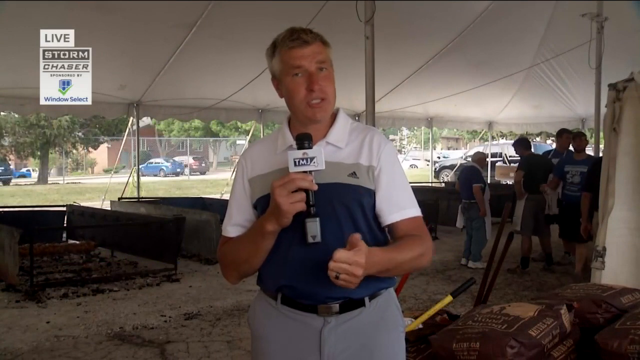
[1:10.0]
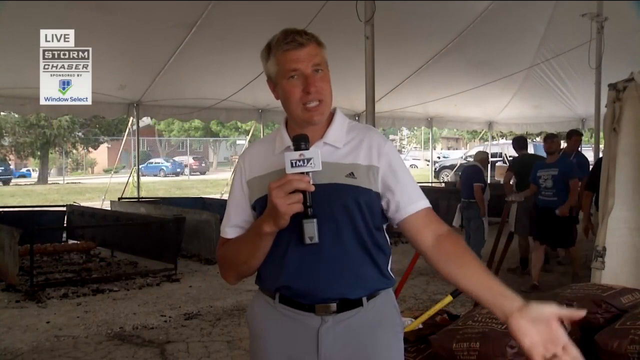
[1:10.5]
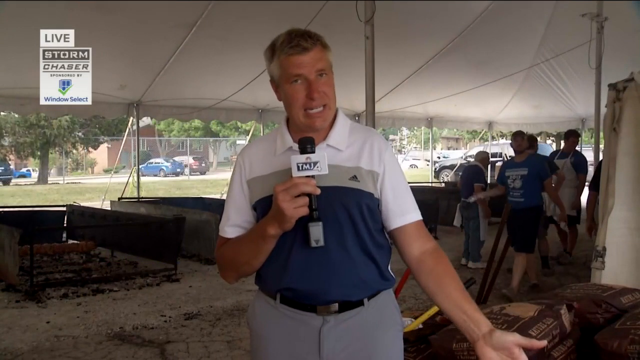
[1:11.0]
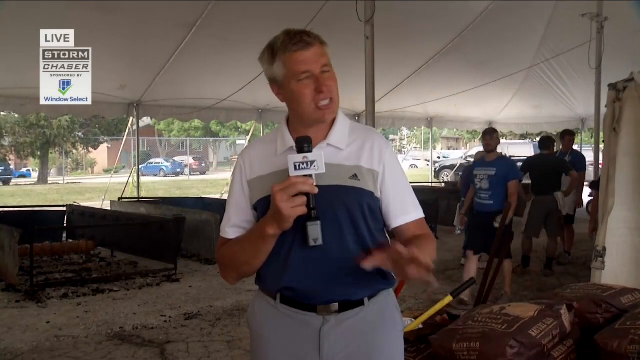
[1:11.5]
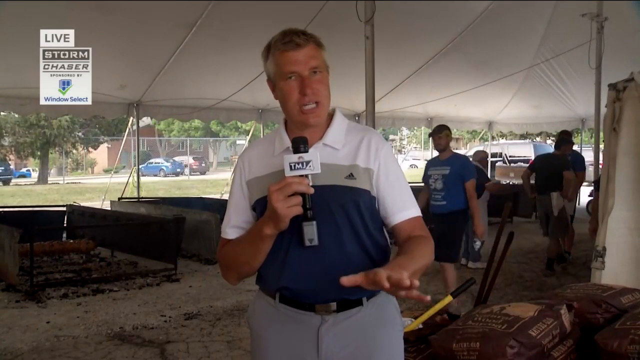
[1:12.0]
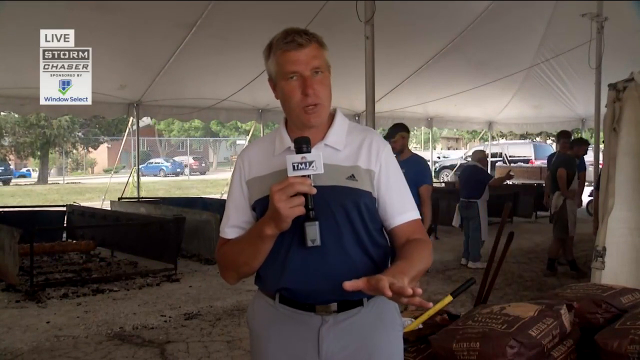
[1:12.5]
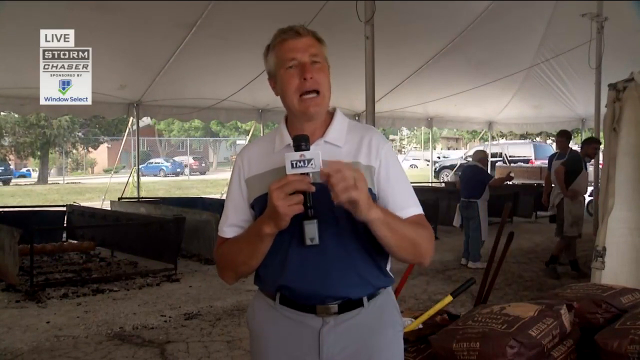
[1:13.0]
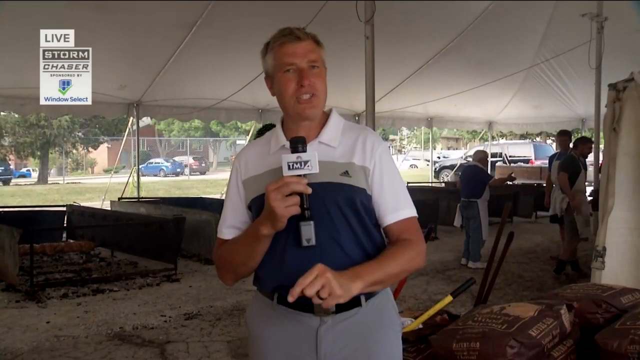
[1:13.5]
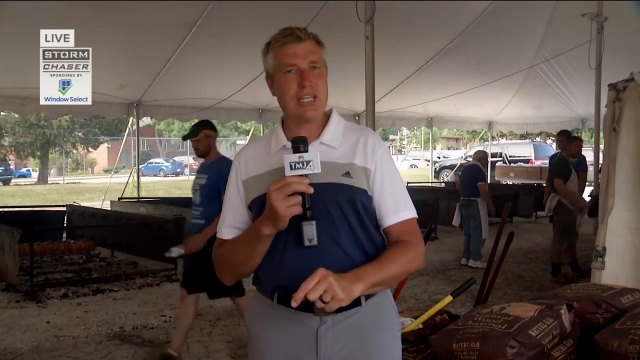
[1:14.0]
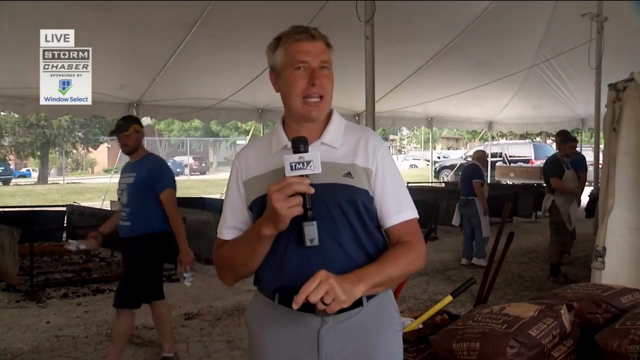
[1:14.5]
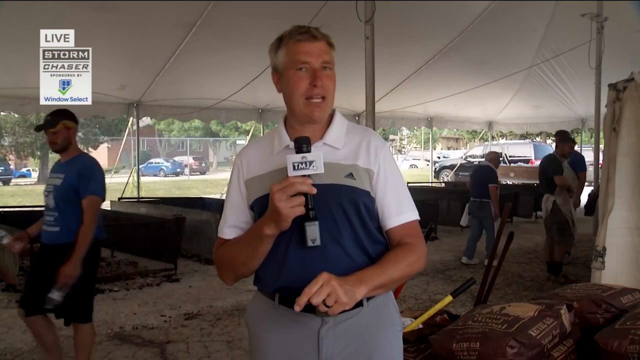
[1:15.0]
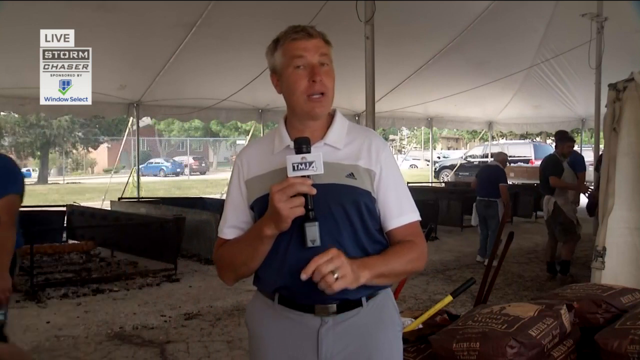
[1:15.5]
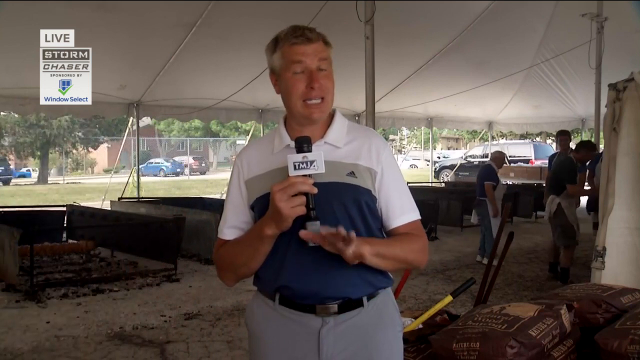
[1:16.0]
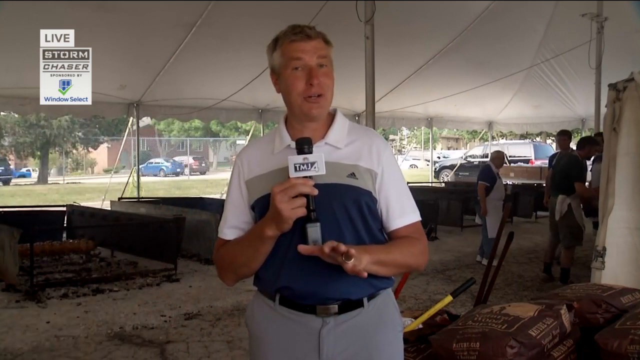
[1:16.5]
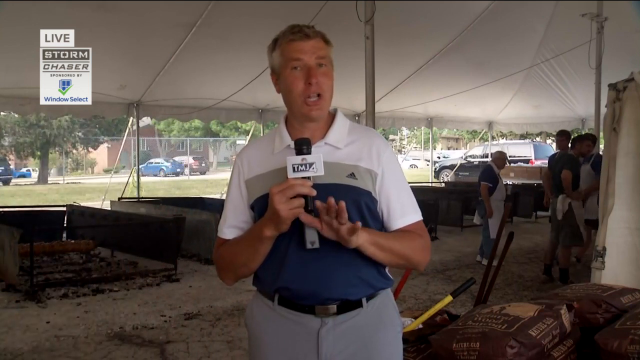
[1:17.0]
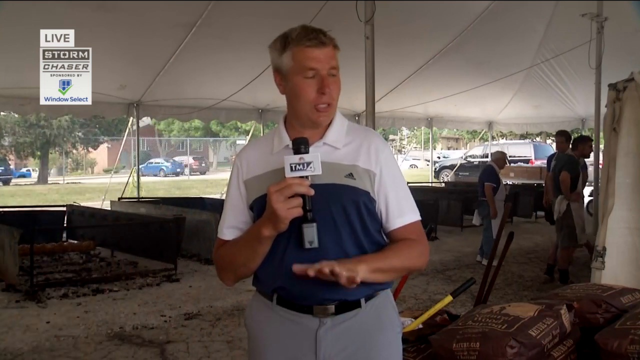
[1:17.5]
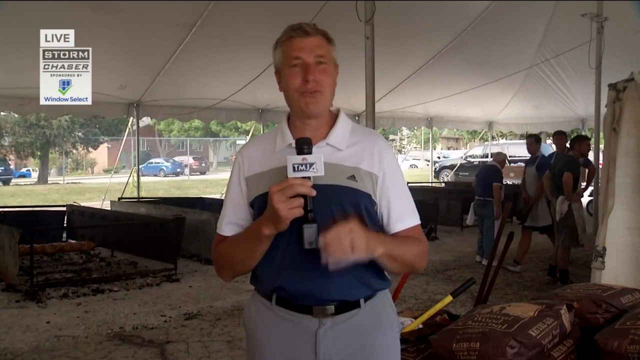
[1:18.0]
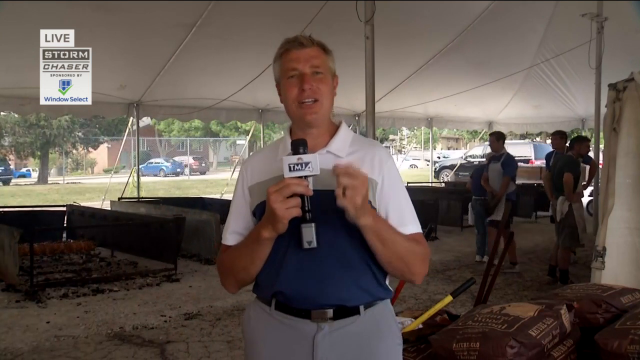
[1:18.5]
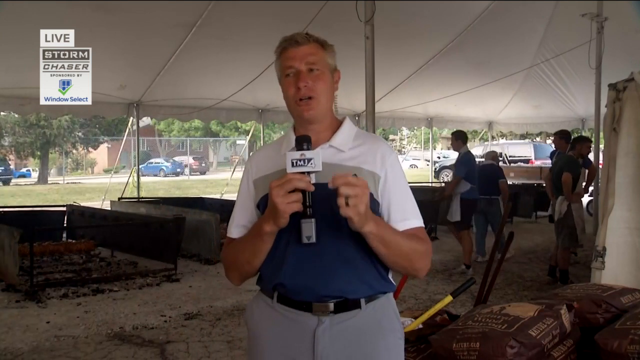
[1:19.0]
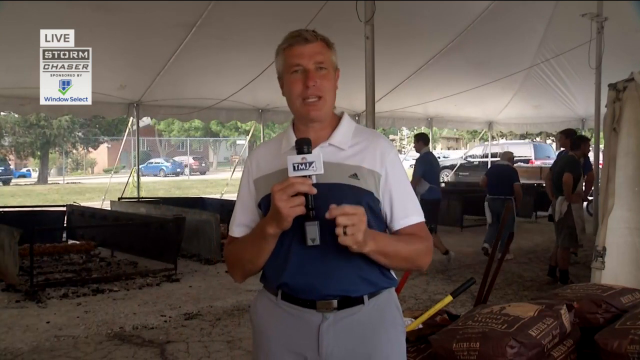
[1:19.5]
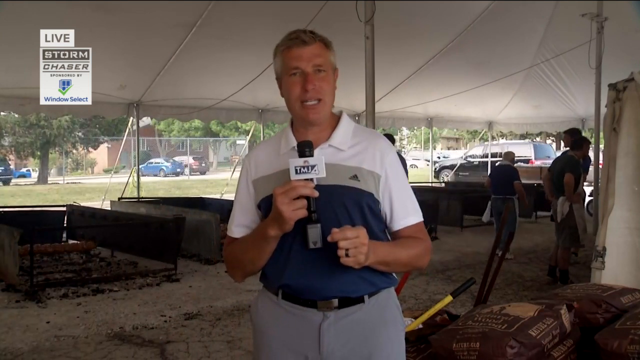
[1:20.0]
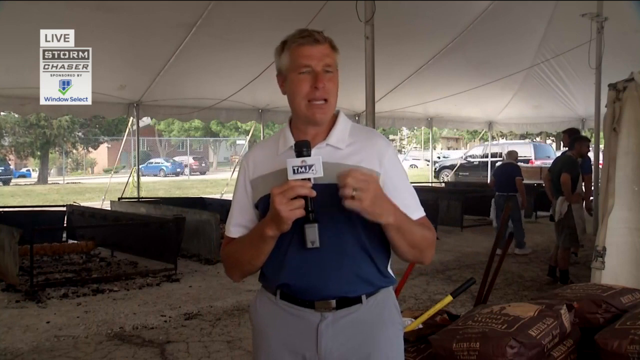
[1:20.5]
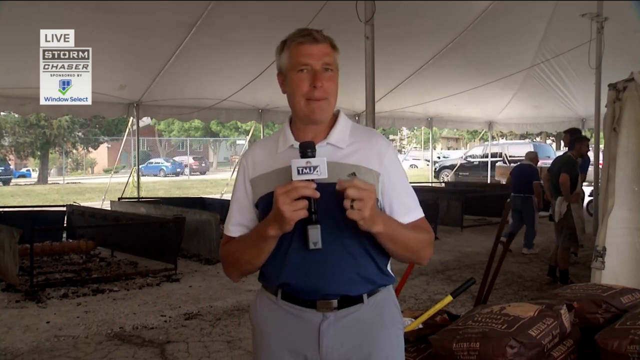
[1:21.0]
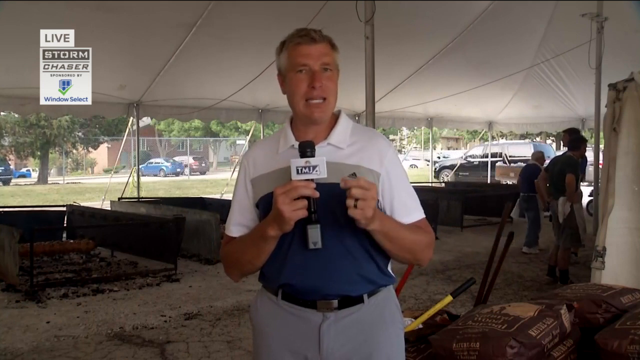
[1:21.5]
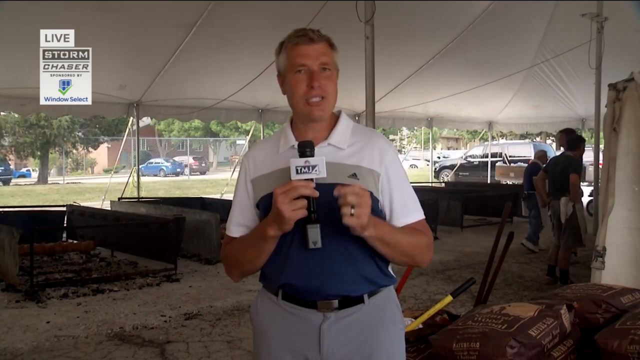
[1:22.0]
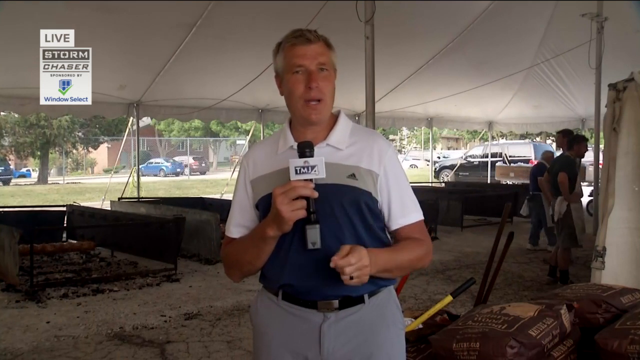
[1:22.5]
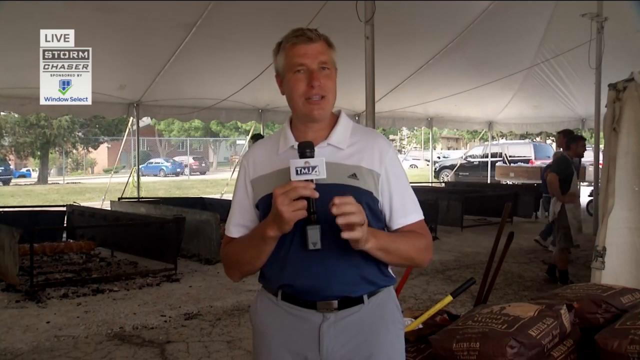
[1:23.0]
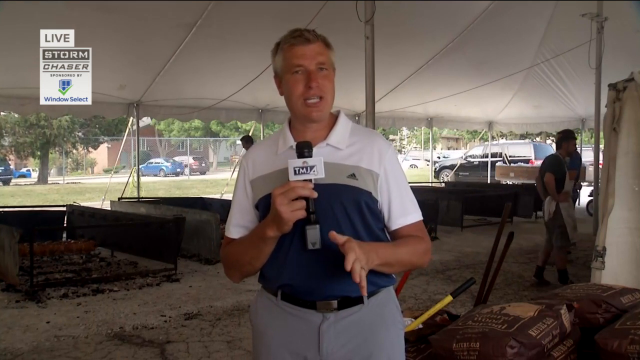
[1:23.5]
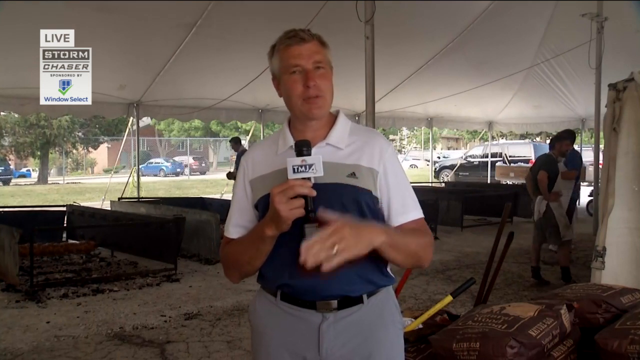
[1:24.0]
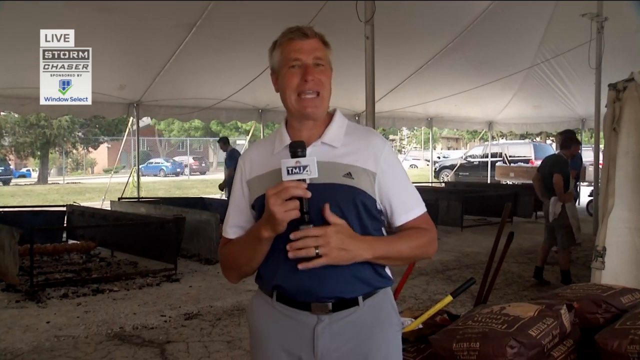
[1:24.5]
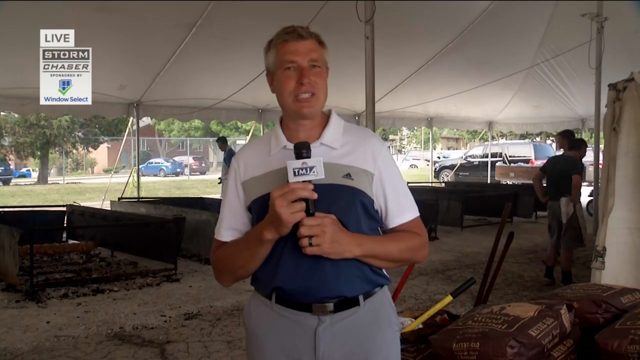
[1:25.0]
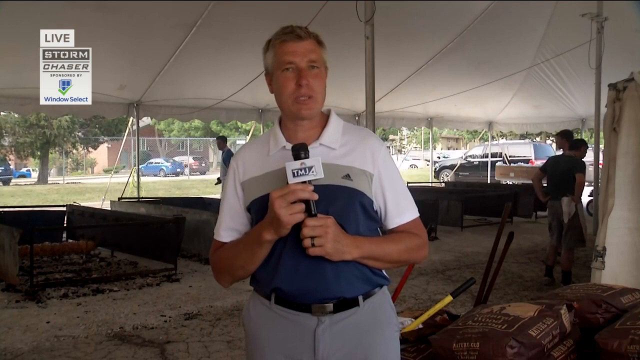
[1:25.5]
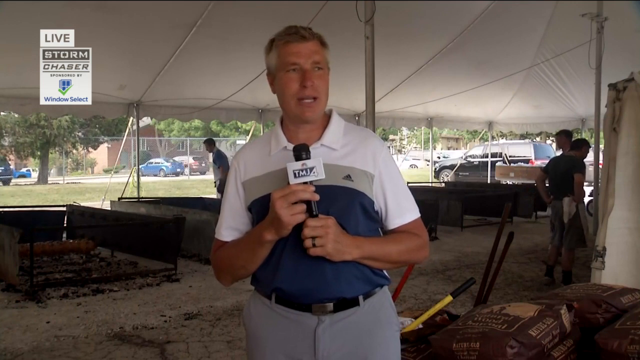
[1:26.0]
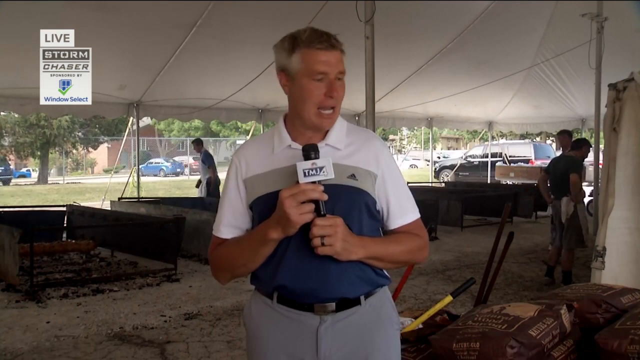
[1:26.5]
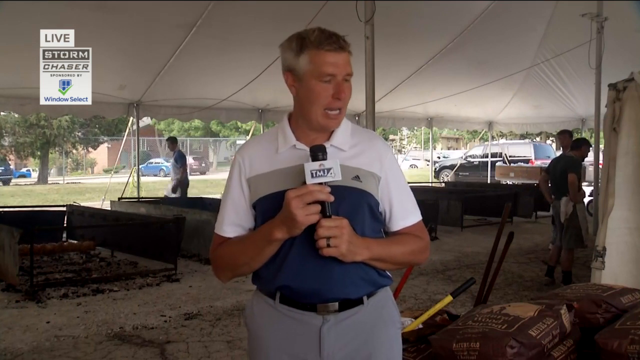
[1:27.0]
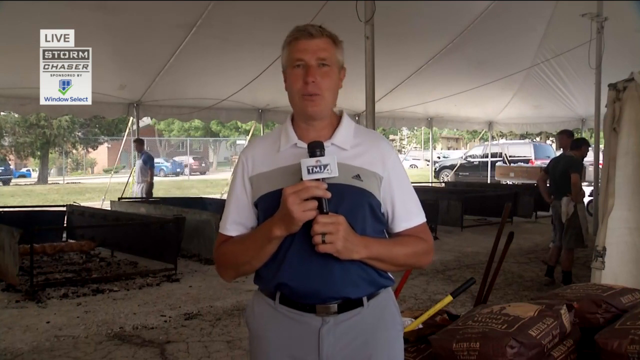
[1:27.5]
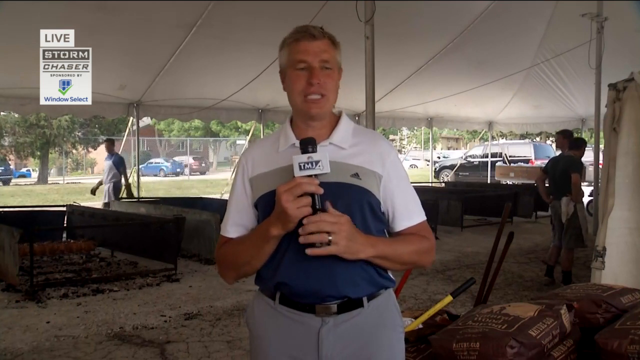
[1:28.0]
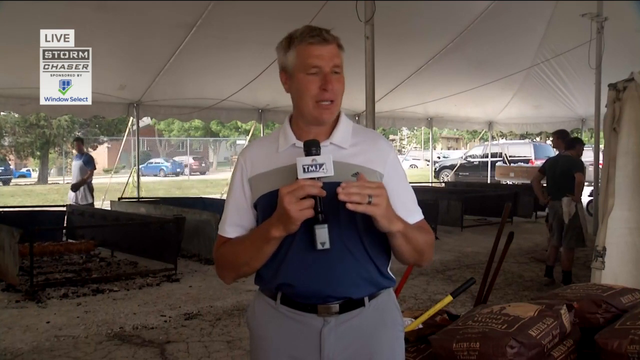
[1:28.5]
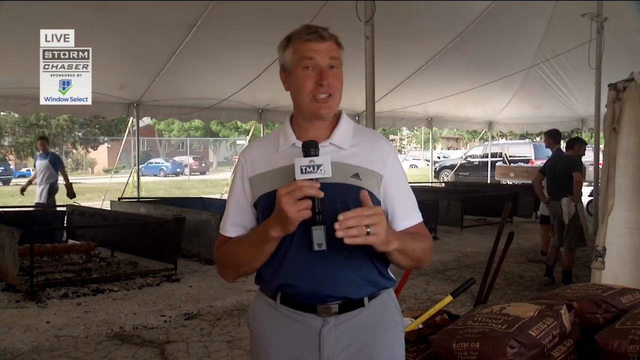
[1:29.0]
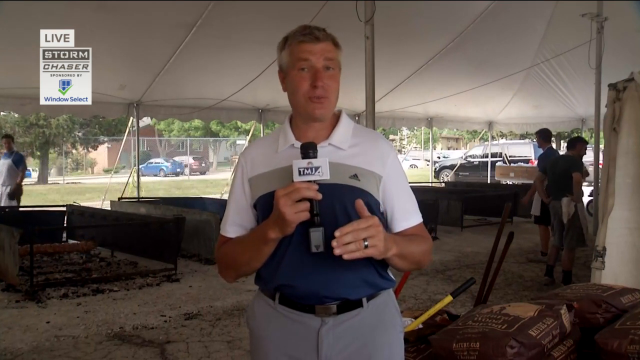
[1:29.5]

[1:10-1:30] A live broadcast shows a man wearing a white t-shirt that seems to be from Adidas, with grey lining and largely covered in navy blue. He seems to be wearing grey pants. He holds the microphone in his left hand with just two fingers and seems to be explaining something with his right arm. He seems to be on a farm. In the top left corner, text reads "live storm chaser". On the right-hand side behind him there seems to be a group of people wearing blue, some of them wearing white overalls on top. The man keeps talking while a man in blue wearing a cap and black pants seems to pass behind him. He continues explaining, using his right hand to lay out his point. Behind him there seems to be movement up and down, with some people moving out of the white tent and others remaining inside it.